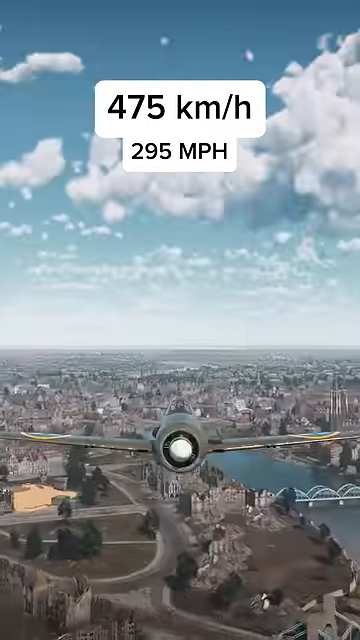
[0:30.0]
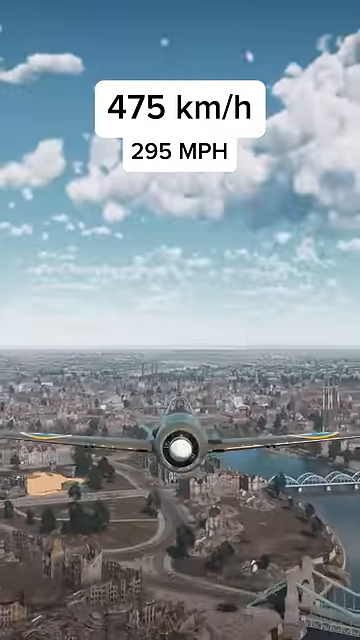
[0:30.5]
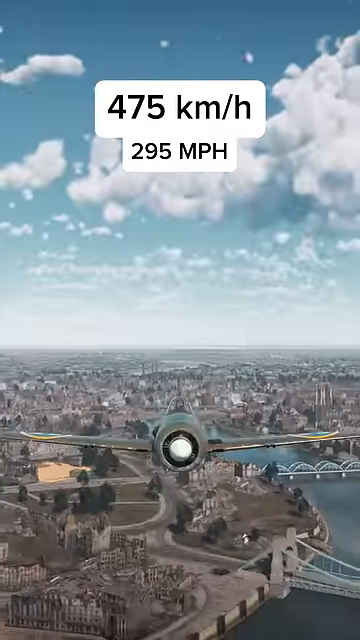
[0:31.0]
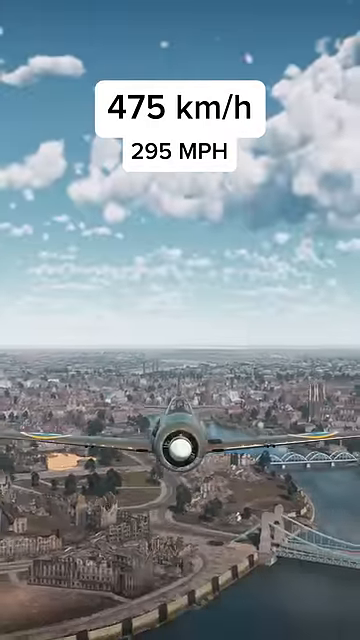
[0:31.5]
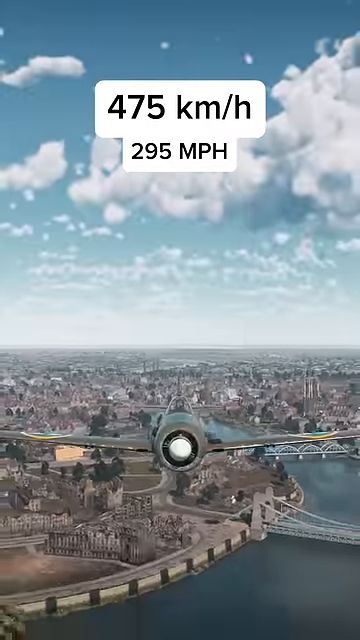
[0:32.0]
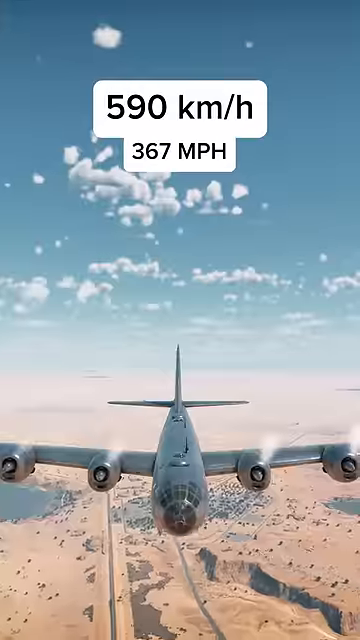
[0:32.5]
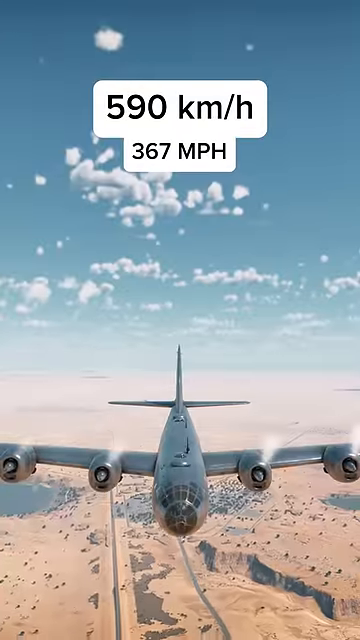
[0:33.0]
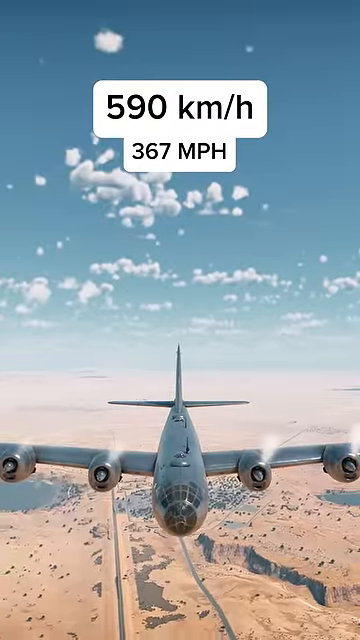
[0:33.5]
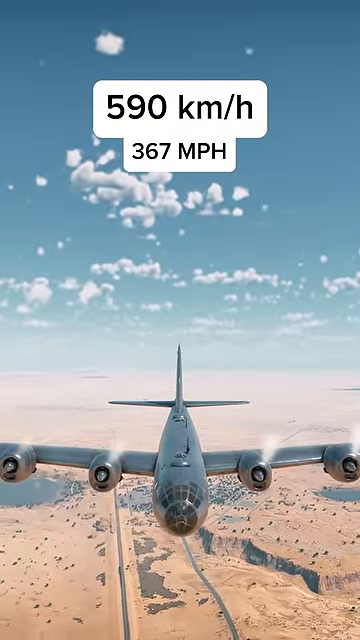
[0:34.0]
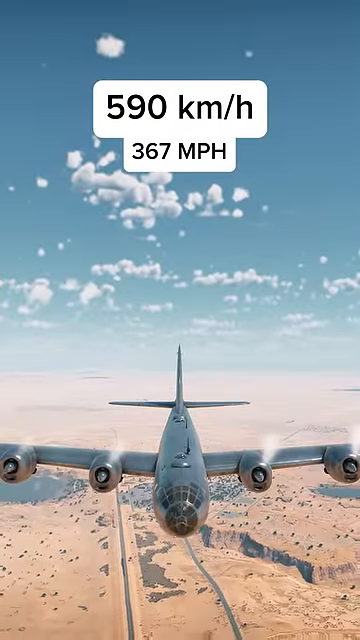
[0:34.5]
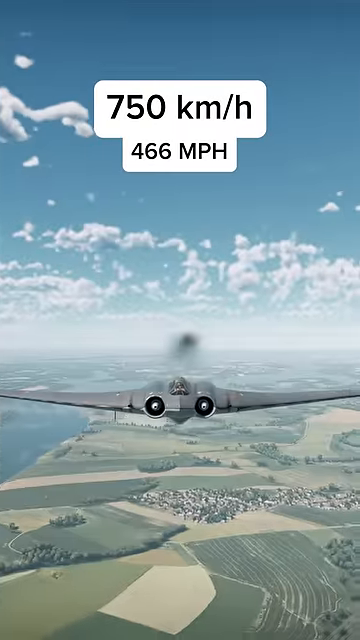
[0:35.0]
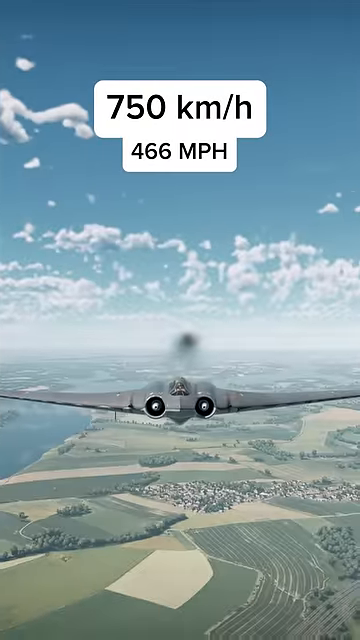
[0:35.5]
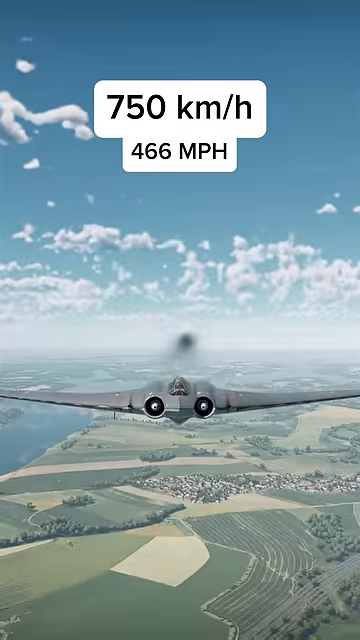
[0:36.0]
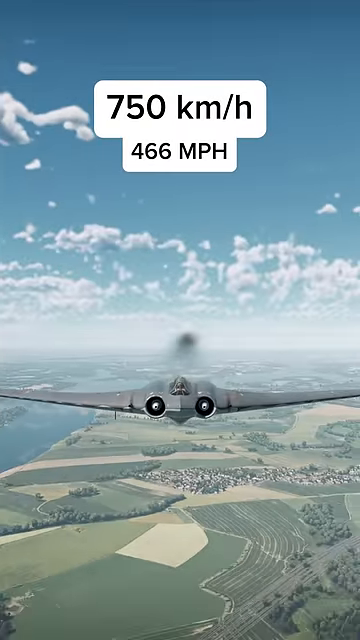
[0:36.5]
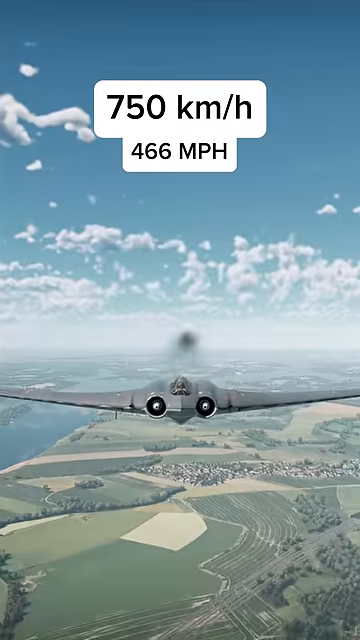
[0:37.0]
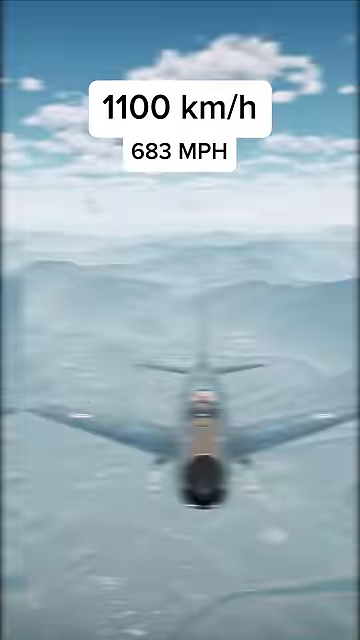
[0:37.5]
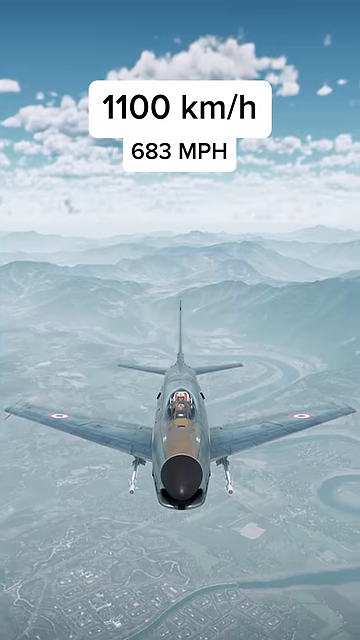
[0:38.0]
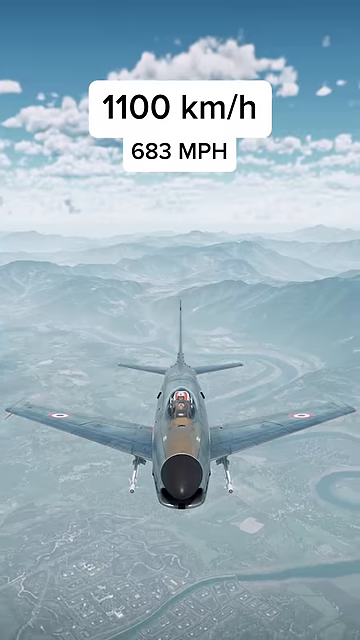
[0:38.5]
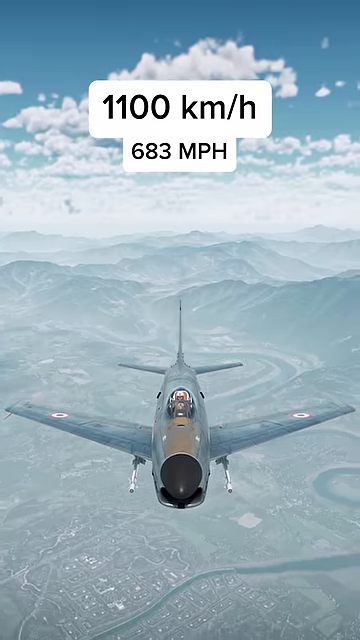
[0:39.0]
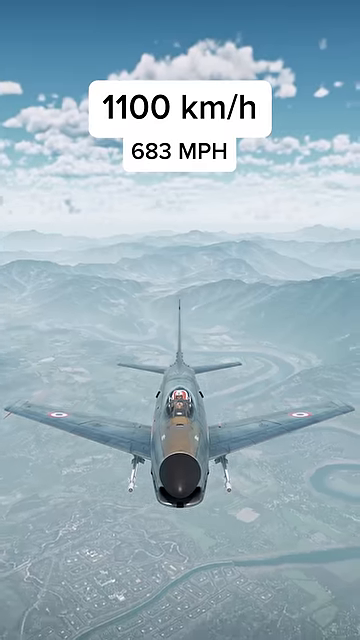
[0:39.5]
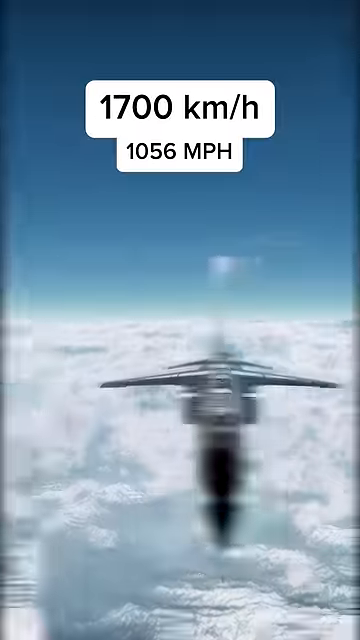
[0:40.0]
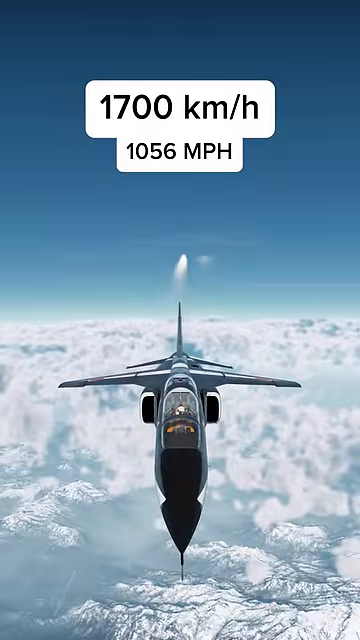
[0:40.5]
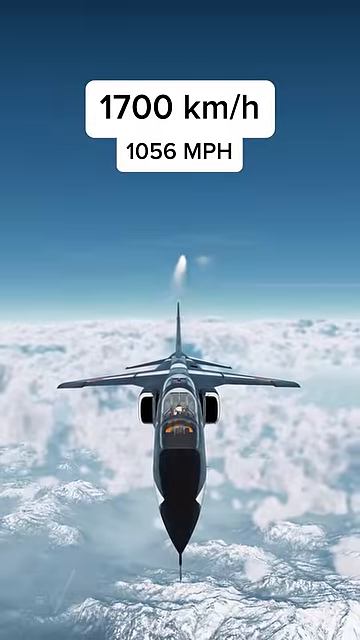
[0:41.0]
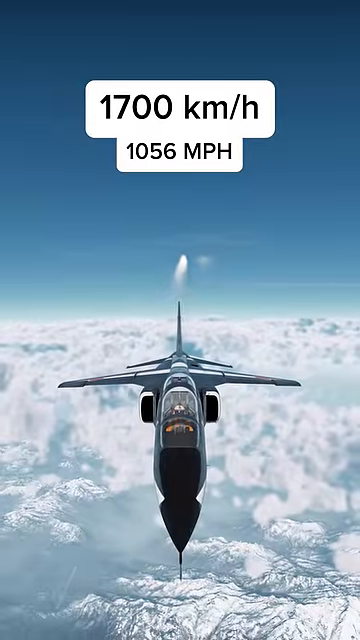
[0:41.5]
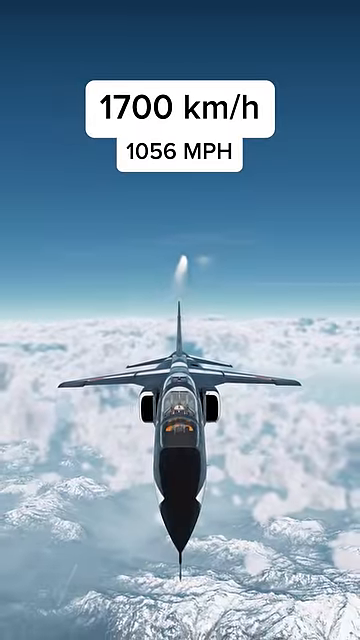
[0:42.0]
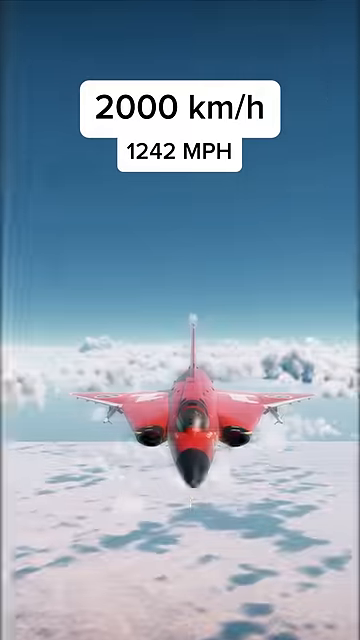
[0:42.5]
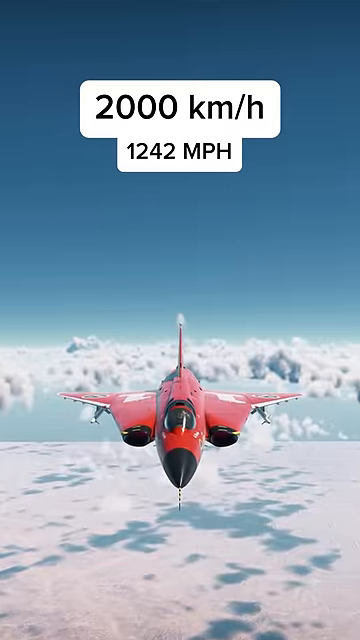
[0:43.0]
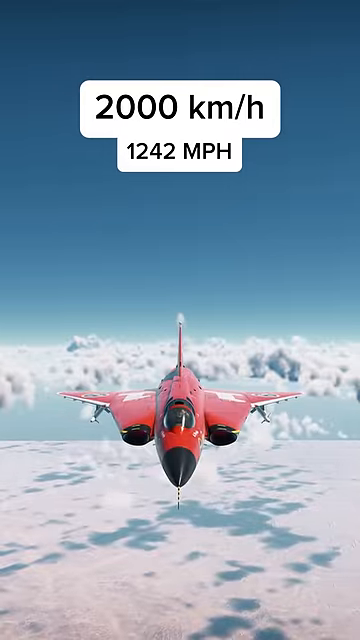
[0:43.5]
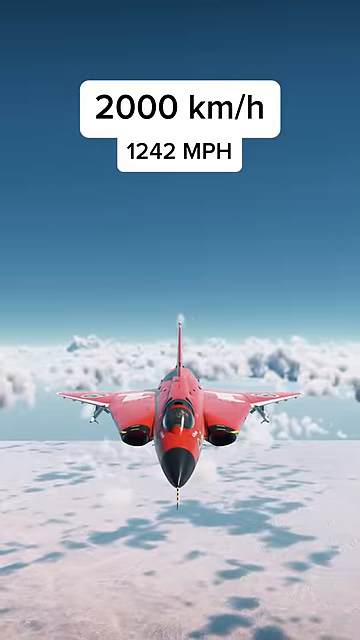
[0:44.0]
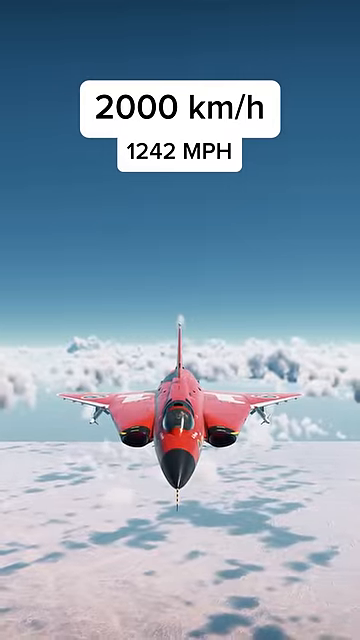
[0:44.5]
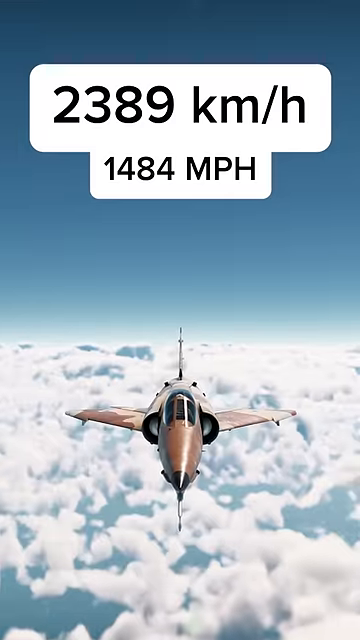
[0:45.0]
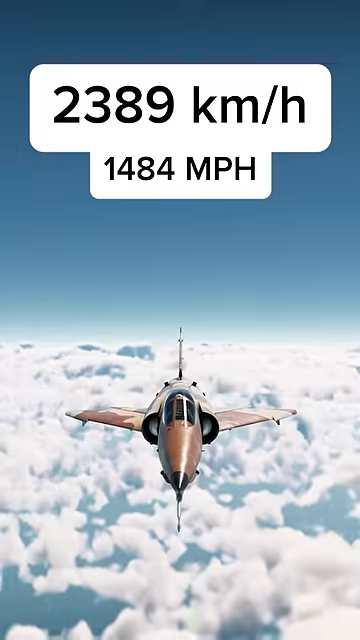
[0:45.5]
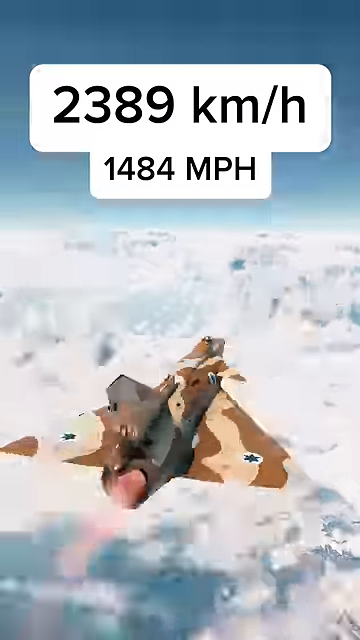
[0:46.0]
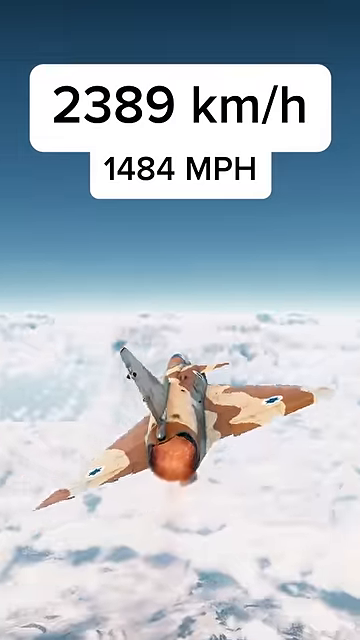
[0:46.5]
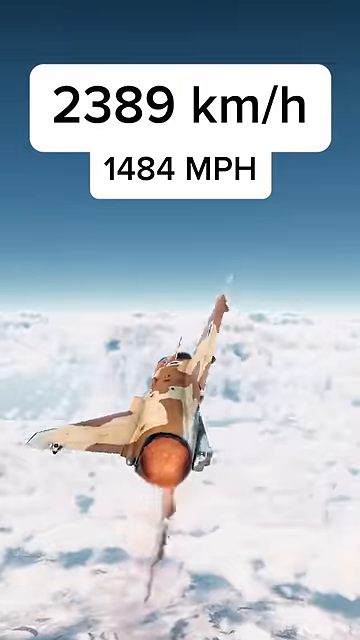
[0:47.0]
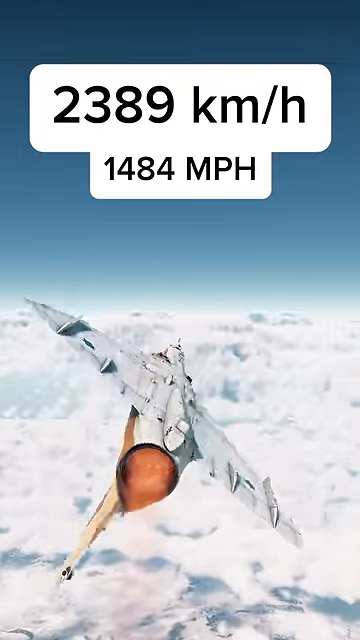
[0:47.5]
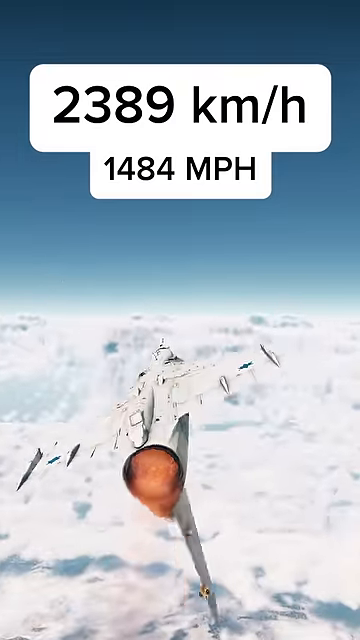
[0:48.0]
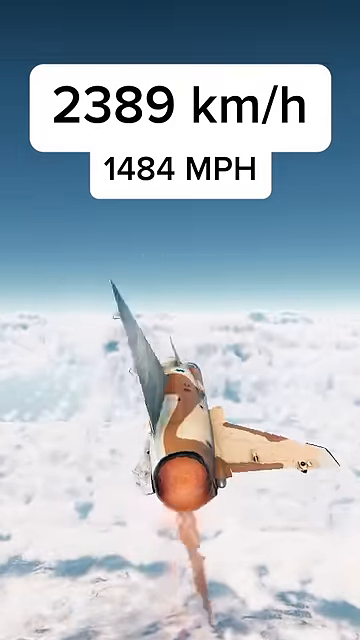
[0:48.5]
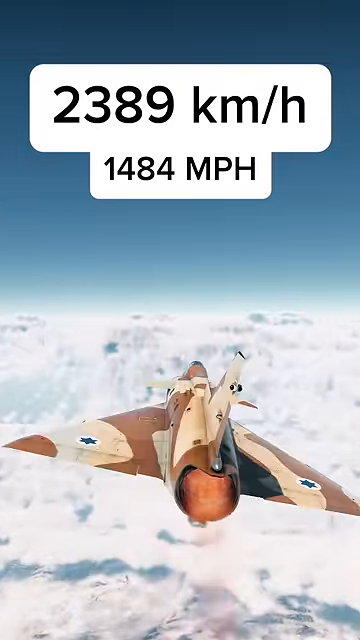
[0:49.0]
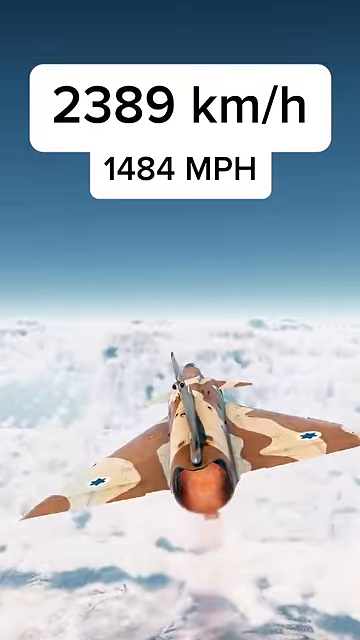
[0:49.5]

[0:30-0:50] Various types of War Thunder planes, single and multi-engine, and then jets appear in order of increasing velocity, with each speed given in both kilometers per hour and miles per hour. First is a plane doing 475 kilometers per hour, then a four-engine plane doing 590 kilometers per hour. The next jet is doing 750 kilometers per hour, another jet 1,100 kilometers, then one at 1,700, one at 2,000 kilometers per hour, and the final one at 2,389 kilometers per hour.